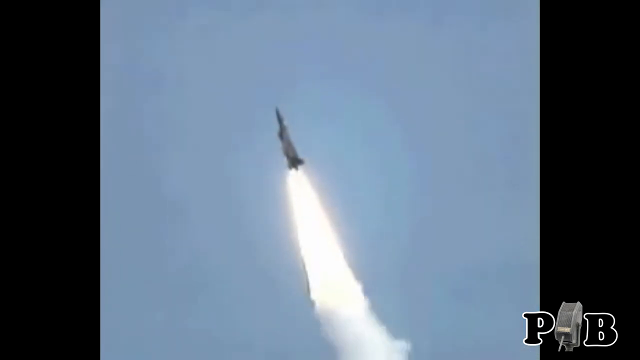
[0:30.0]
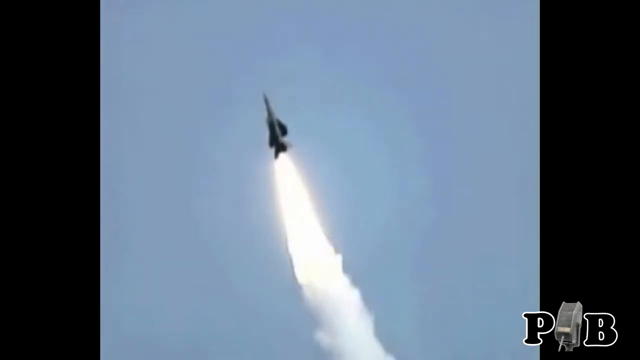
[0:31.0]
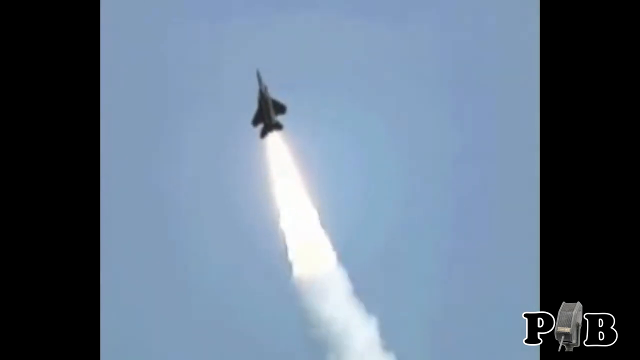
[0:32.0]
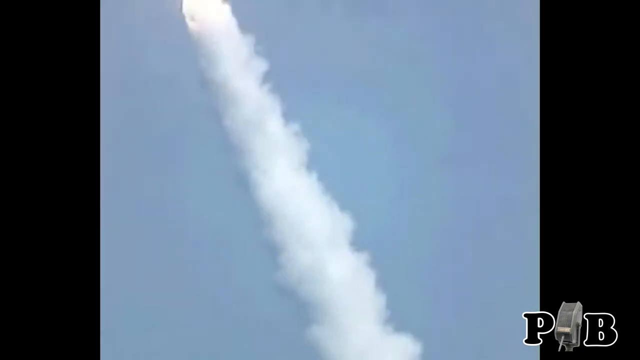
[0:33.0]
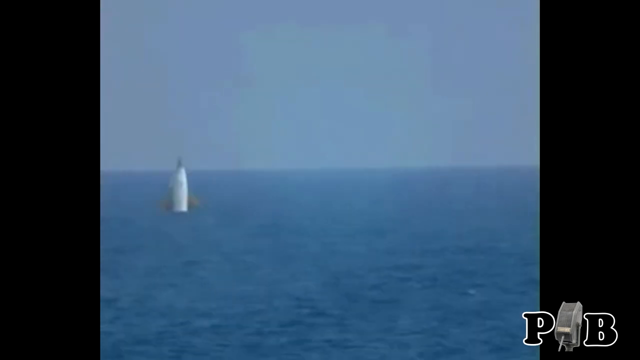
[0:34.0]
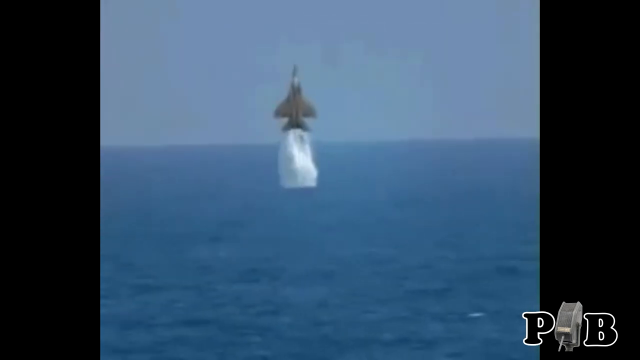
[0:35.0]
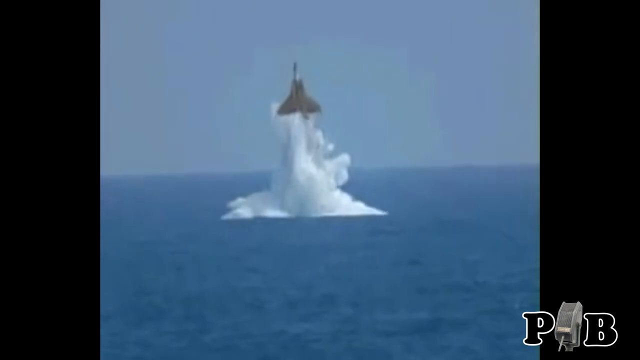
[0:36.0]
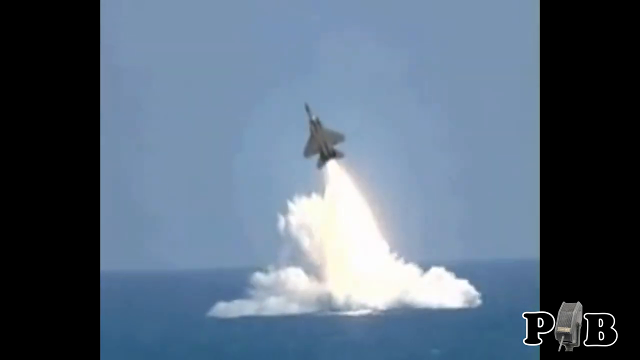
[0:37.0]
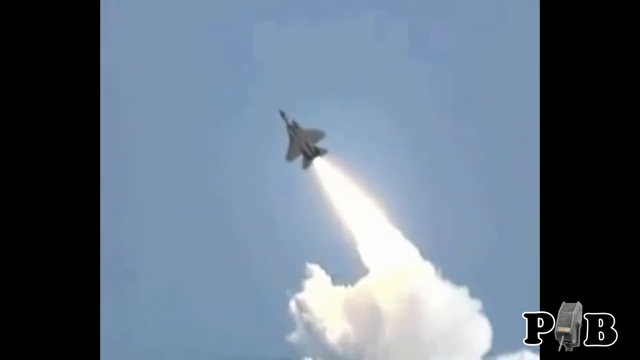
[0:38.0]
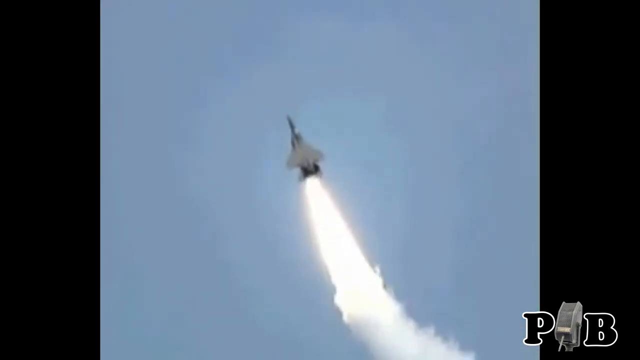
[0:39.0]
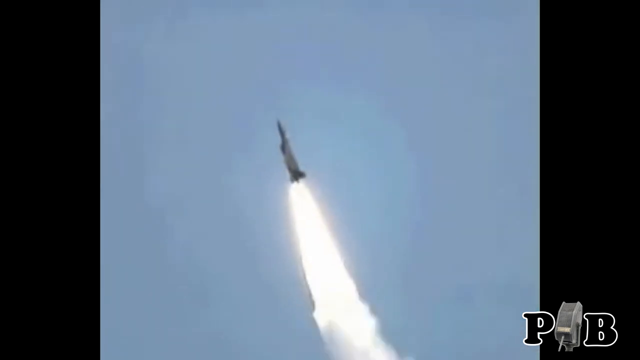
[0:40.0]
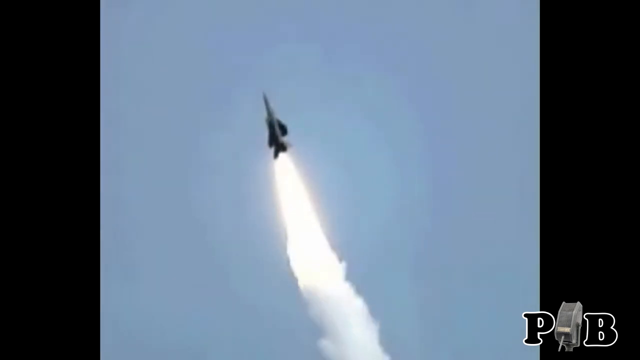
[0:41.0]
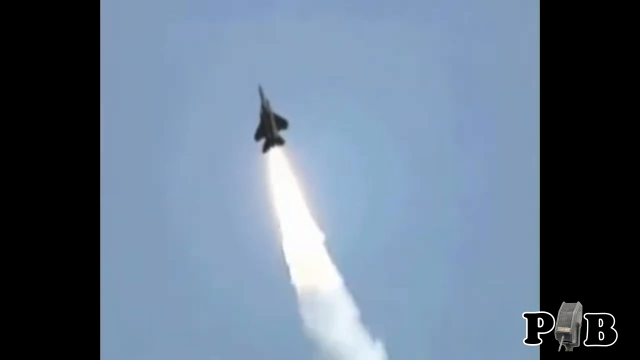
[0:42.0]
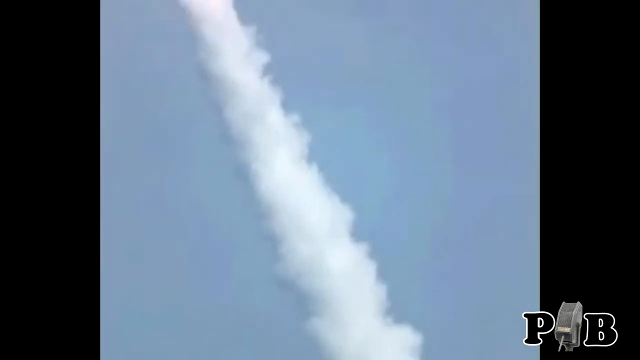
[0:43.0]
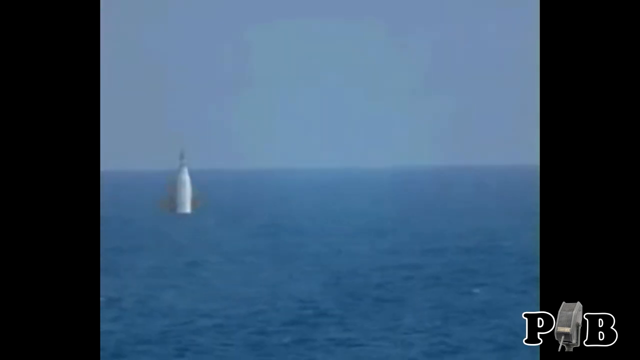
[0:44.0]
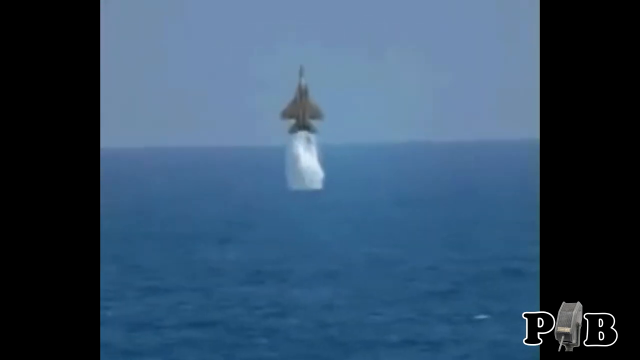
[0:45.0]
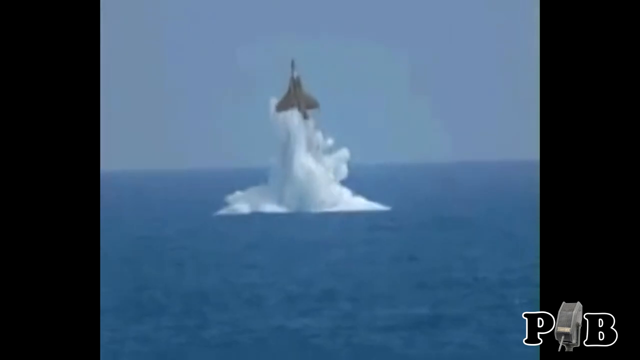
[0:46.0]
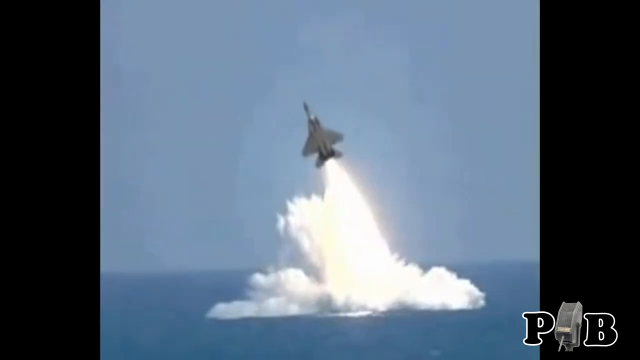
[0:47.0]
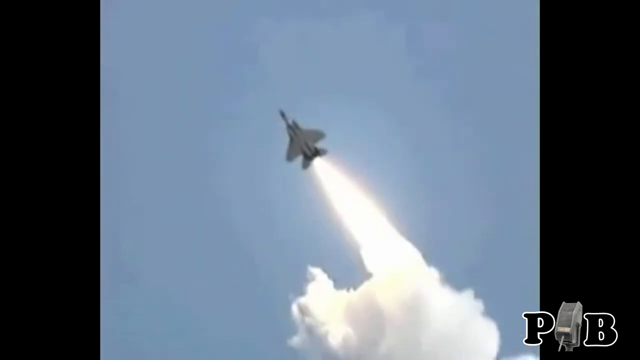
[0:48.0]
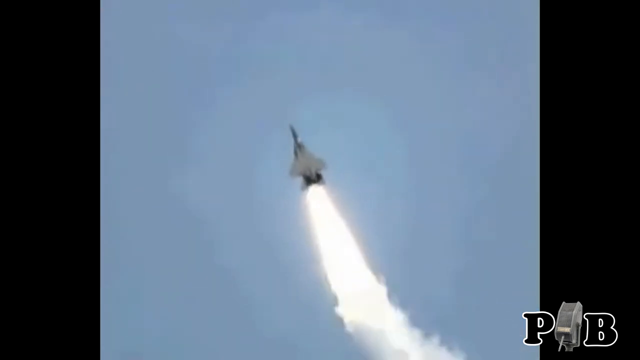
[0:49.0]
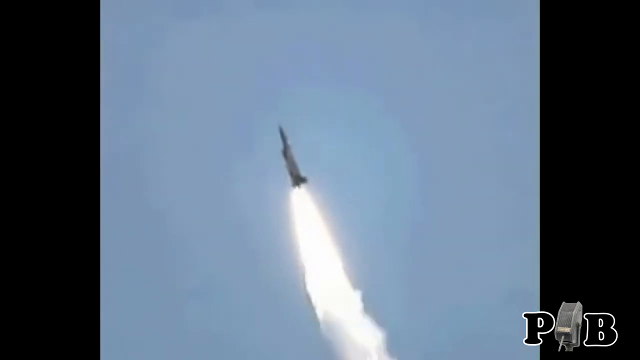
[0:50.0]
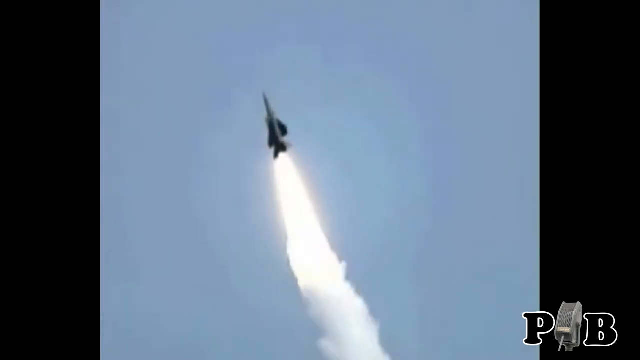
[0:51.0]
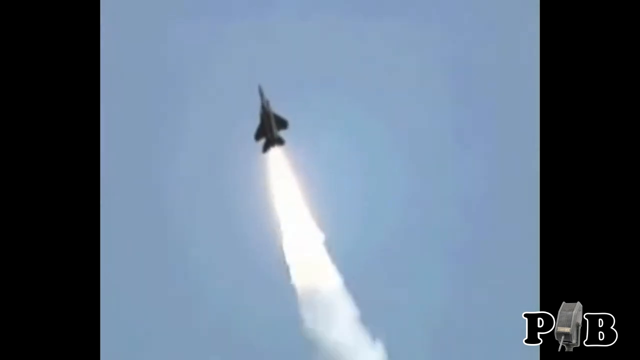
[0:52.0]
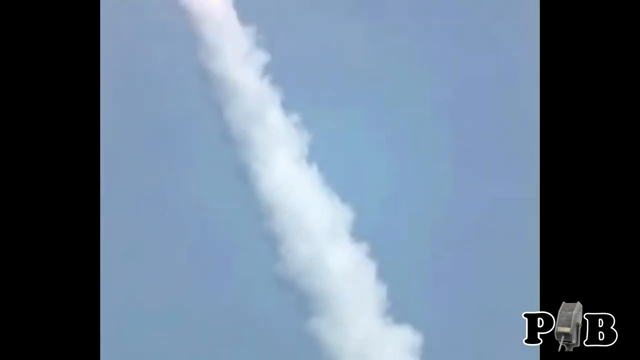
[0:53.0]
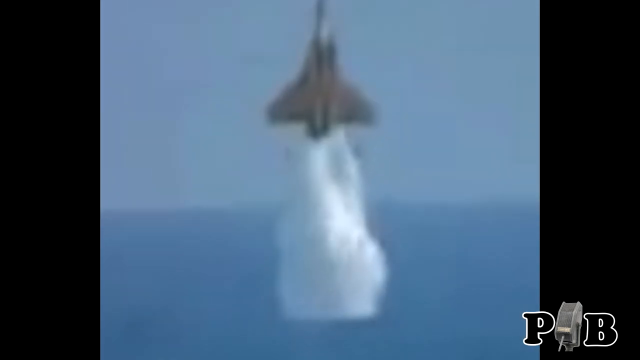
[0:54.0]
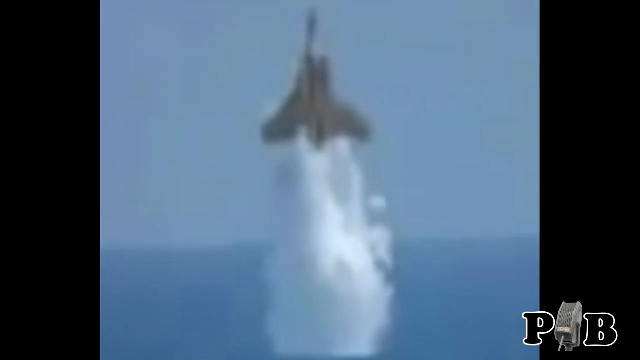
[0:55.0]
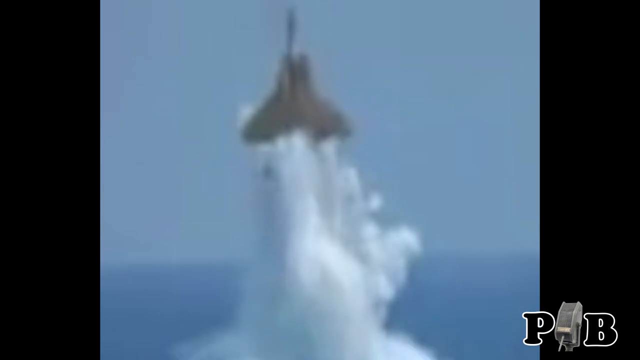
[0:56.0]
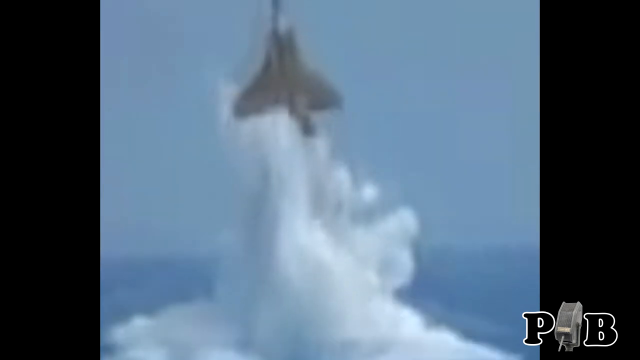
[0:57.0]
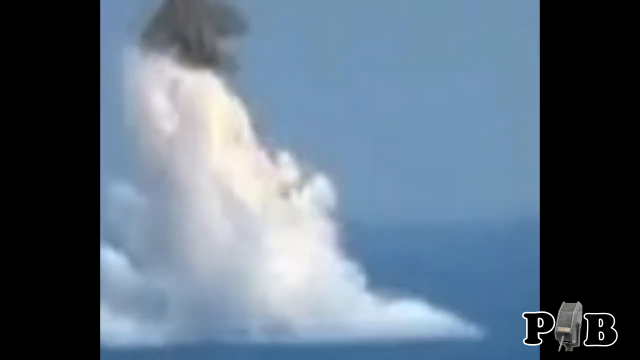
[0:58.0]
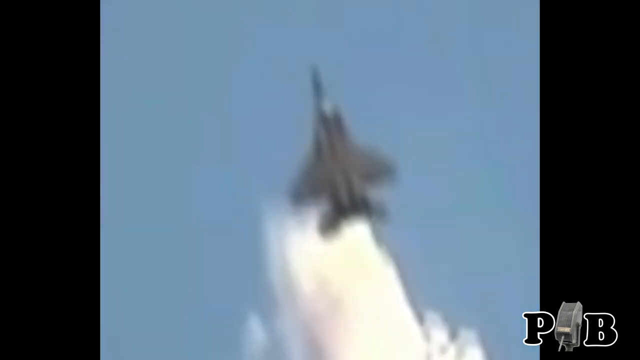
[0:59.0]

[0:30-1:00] The jet turns around itself a little, and then the sea view returns and the jet leaves the sea again, apparently as a repeat. The sea view shows two shades of blue, lighter and darker, and the jet emerges from the water into the air over and over. One shot is a close-up in slow motion of the jet leaving the sea, showing burning fuel creating a yellow beam followed by white clouds coming out of the jet. It starts with an immediate vertical ascent, then tilts a little toward the left and goes further up into the sky.